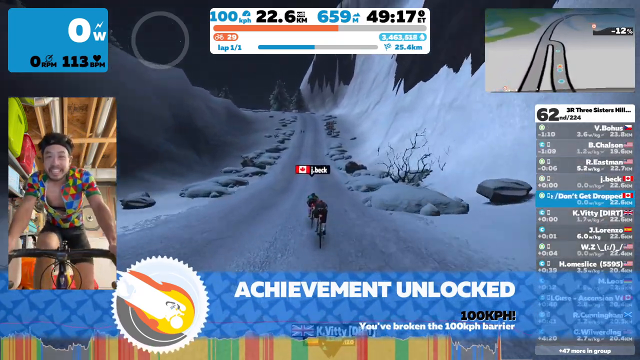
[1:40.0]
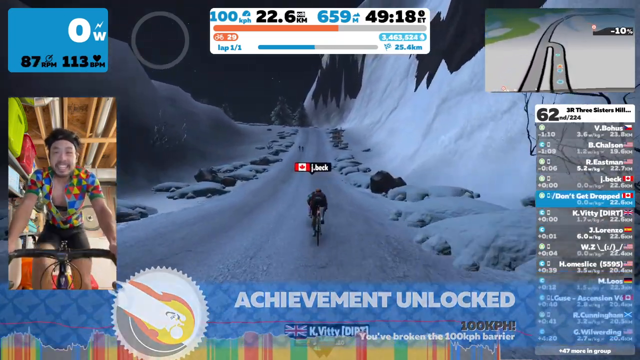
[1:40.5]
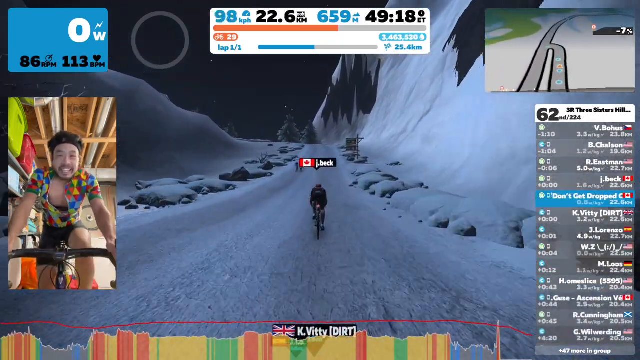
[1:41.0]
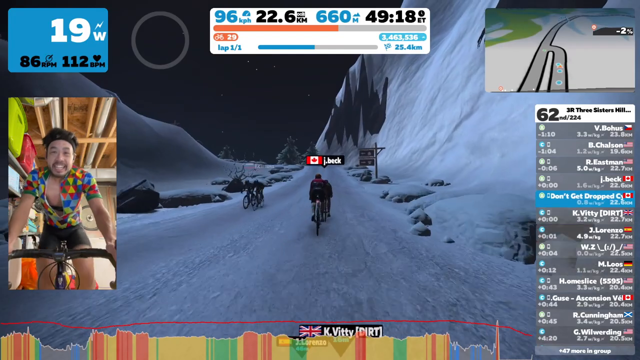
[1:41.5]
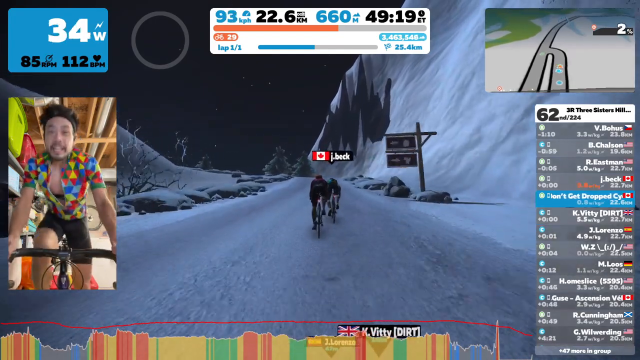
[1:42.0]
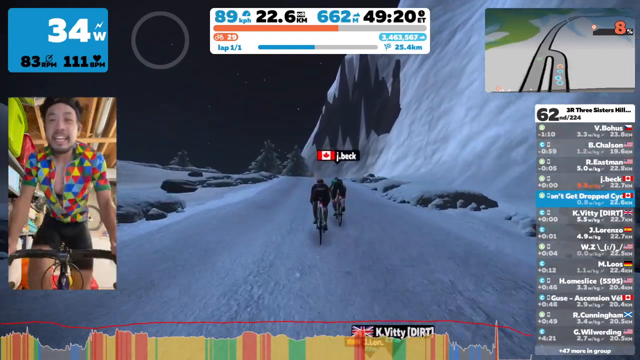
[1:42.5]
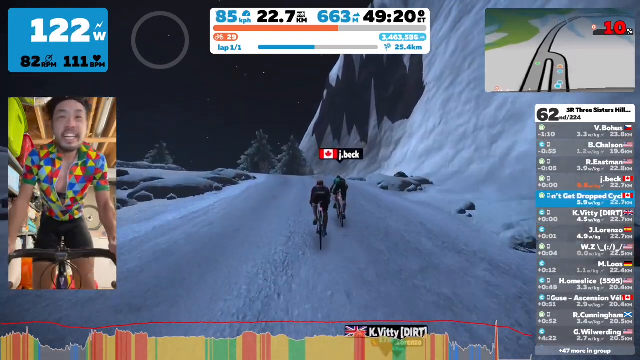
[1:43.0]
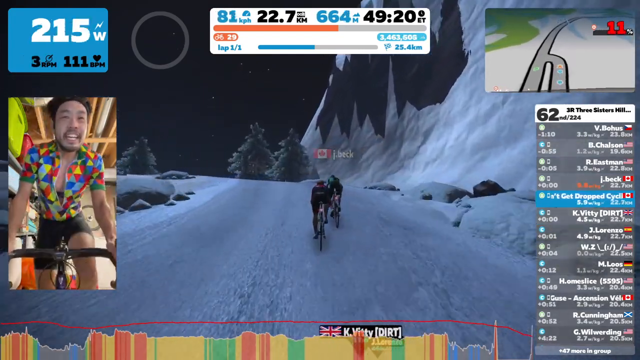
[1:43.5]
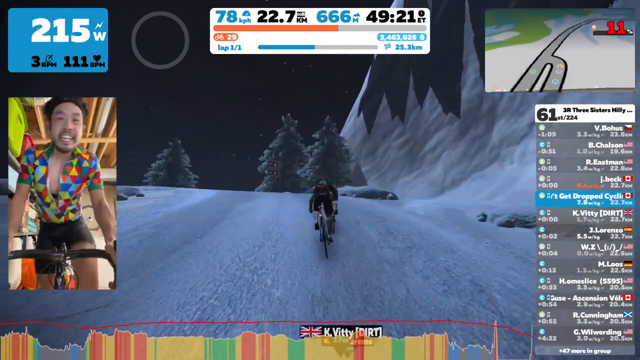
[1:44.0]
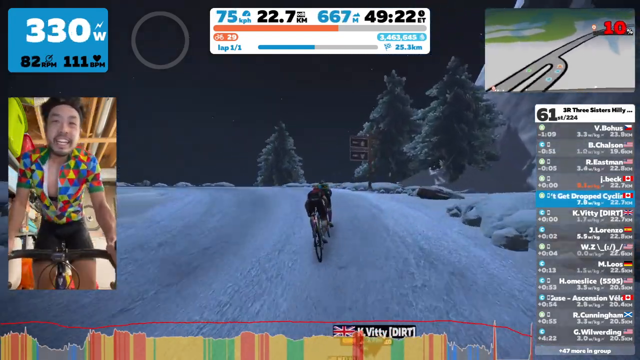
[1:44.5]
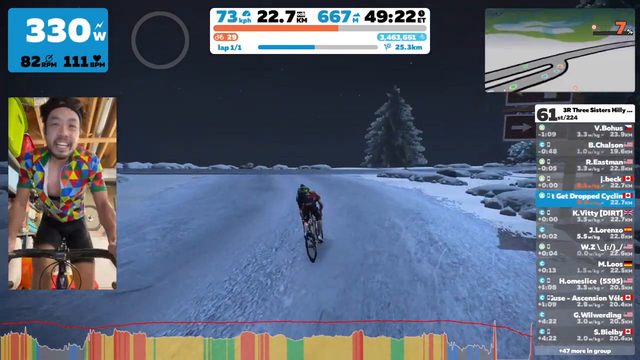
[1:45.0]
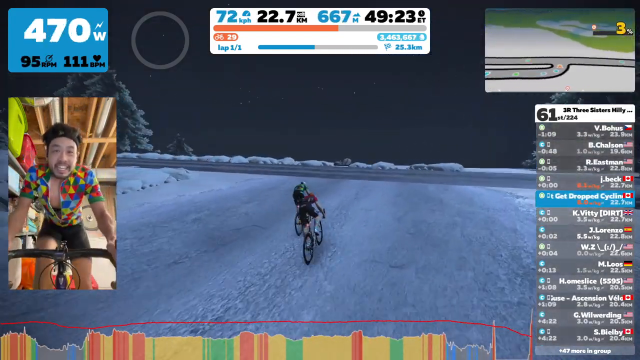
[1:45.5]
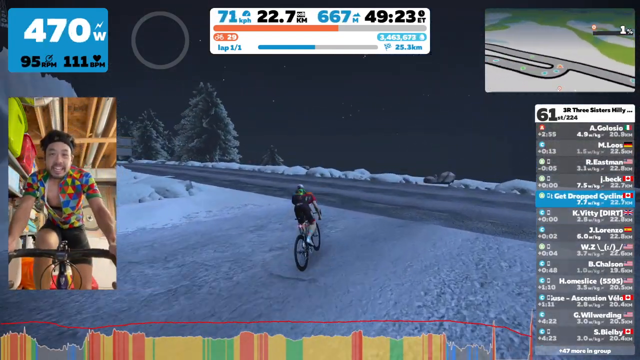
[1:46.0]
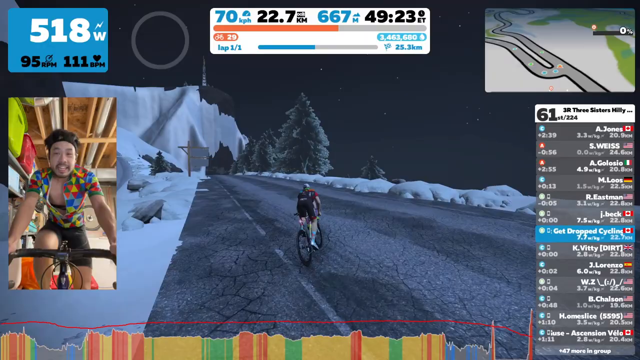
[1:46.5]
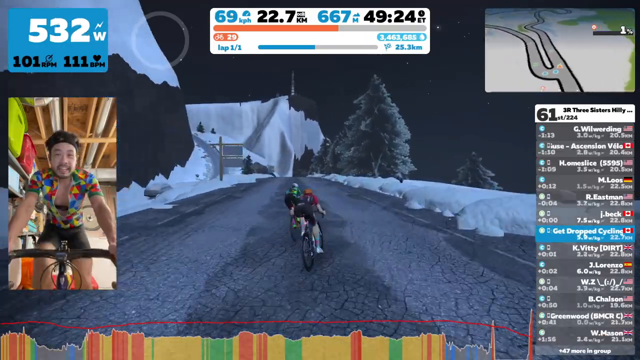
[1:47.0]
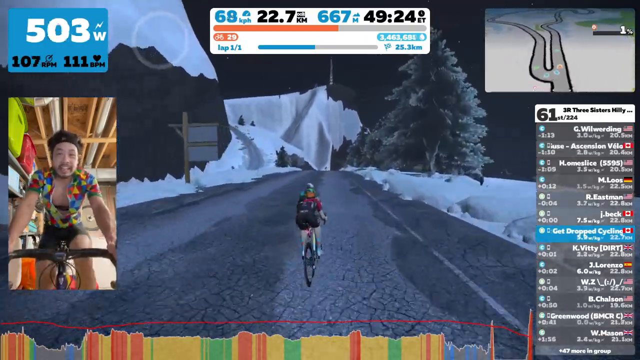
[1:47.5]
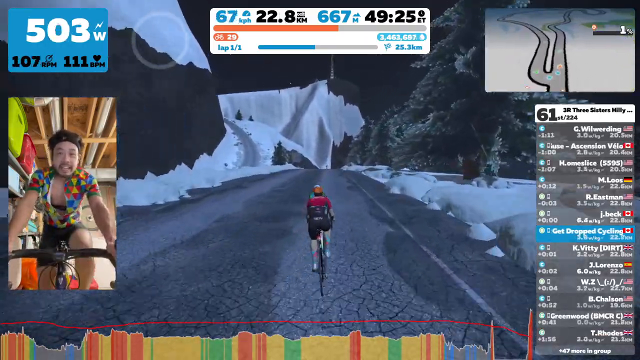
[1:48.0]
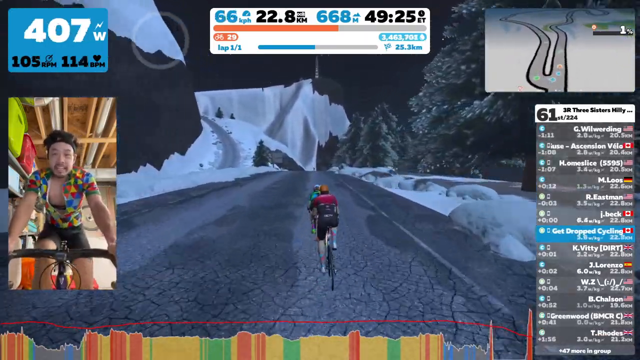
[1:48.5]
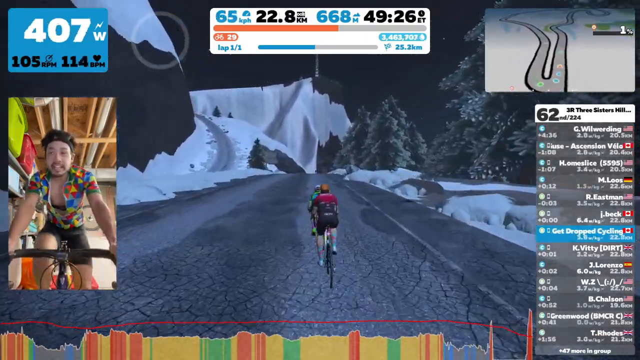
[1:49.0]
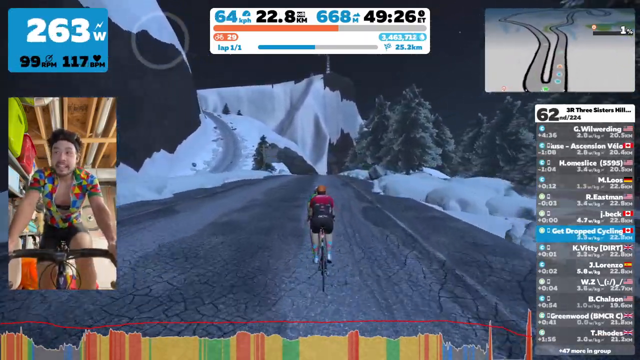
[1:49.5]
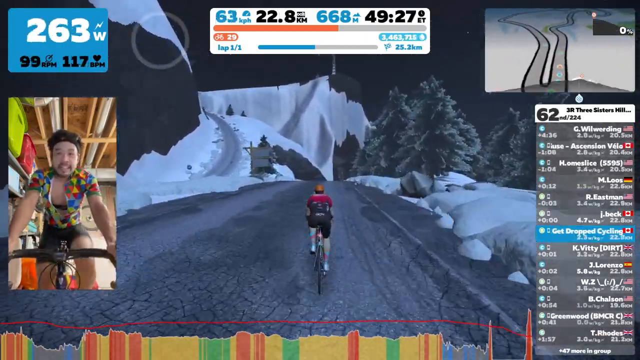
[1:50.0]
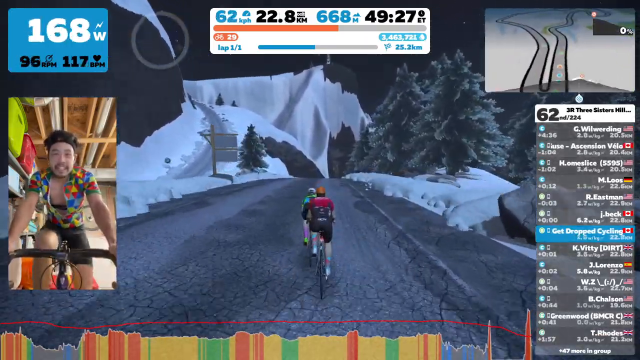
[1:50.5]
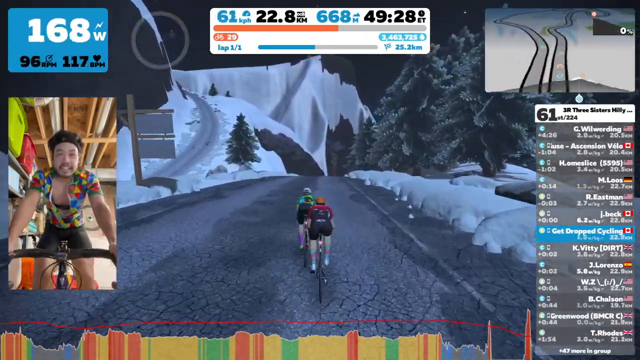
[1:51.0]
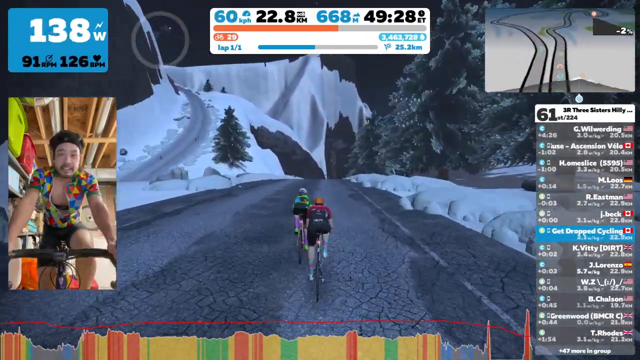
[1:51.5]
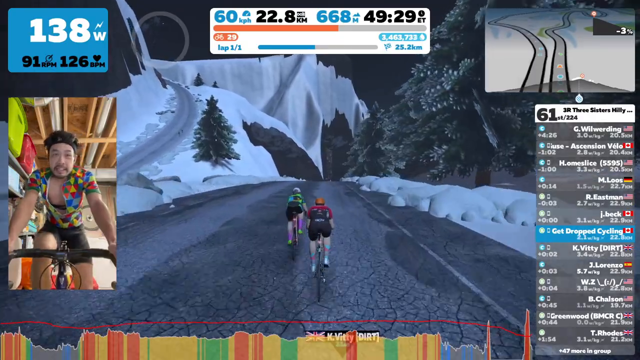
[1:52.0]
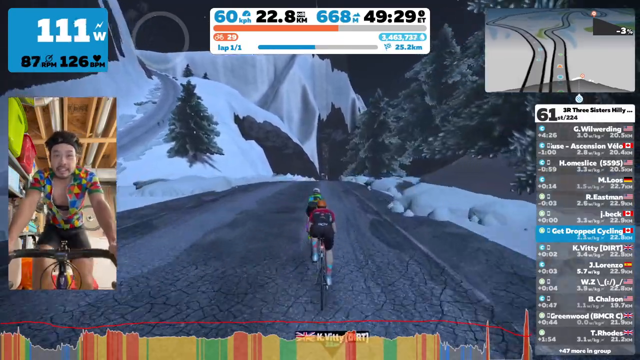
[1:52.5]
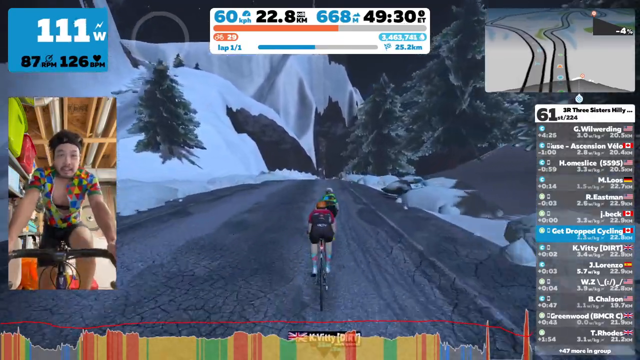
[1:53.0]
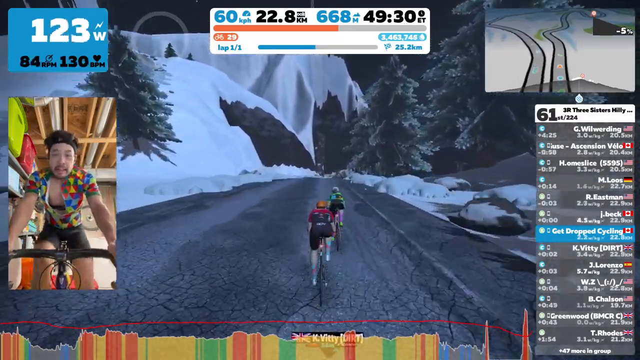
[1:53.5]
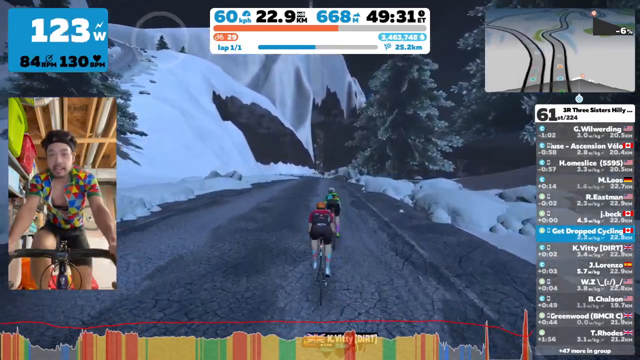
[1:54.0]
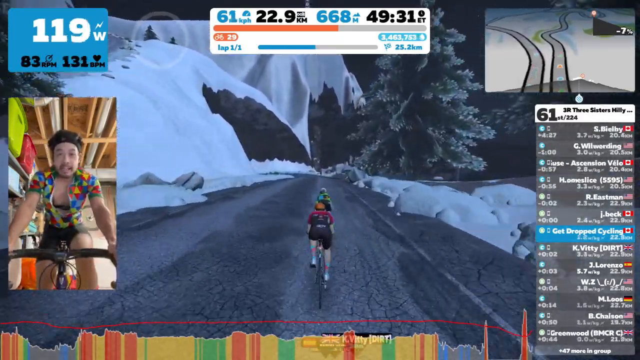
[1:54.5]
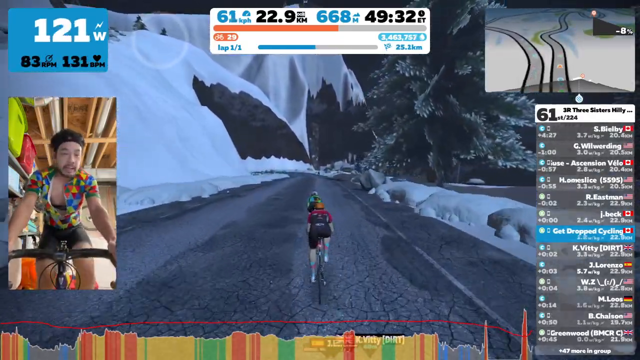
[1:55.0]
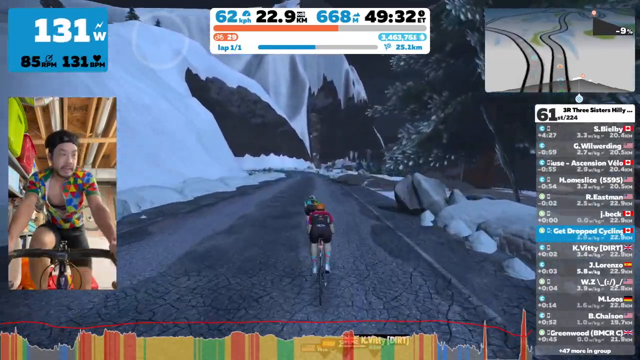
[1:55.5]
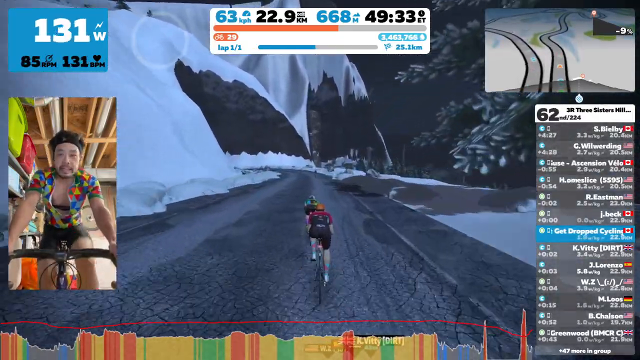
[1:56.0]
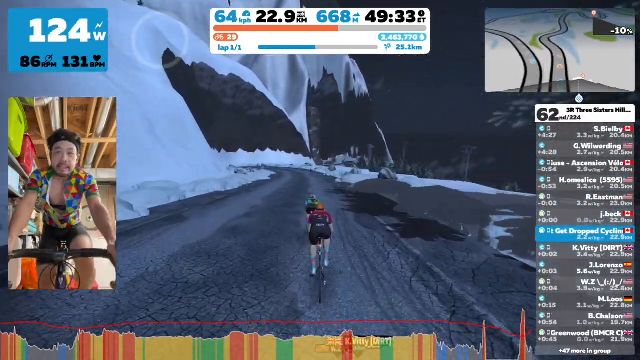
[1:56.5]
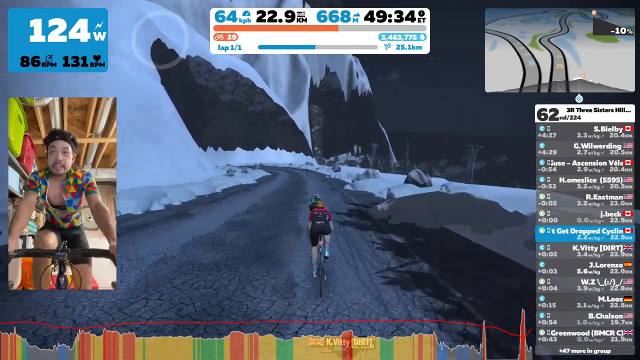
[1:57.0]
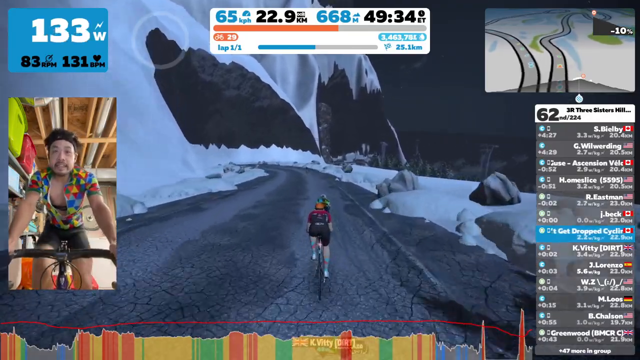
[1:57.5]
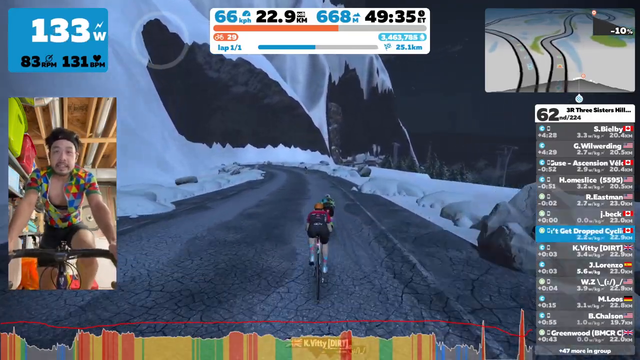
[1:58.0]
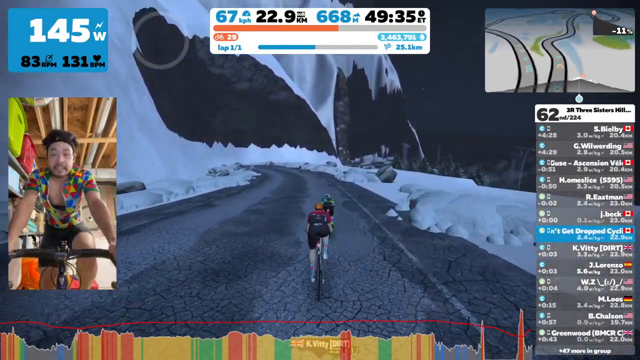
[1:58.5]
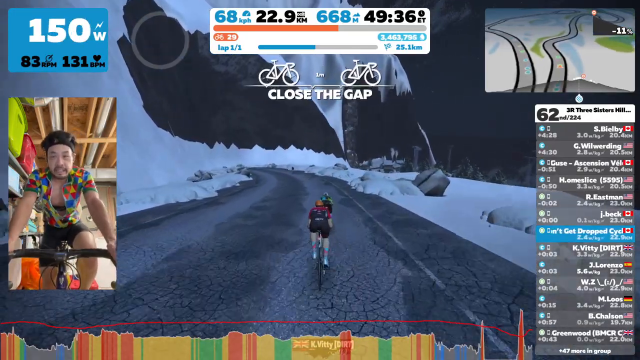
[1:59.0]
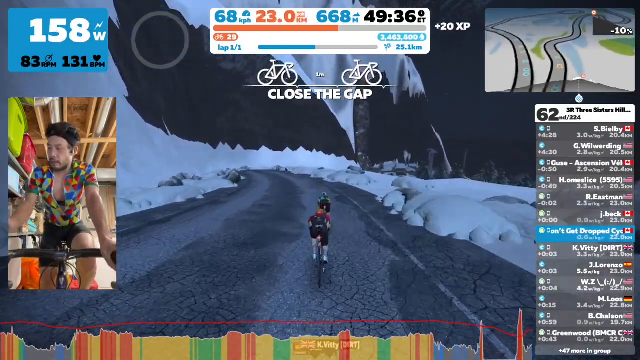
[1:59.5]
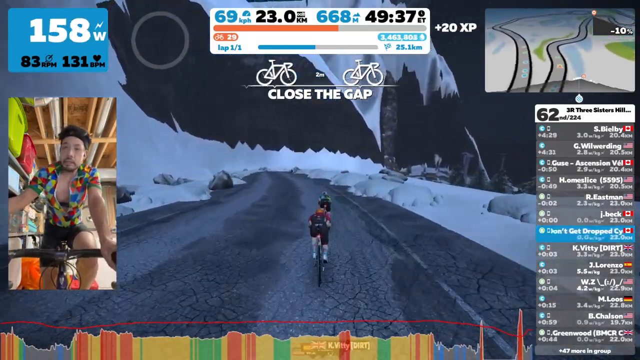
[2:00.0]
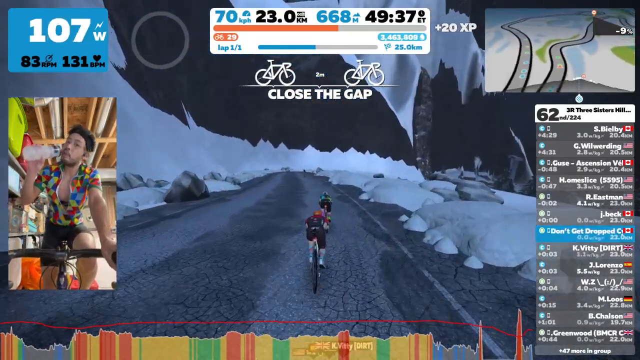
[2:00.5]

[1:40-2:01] The player pedals again, trying to pass someone named jbeck. Very close behind, he stands up and pedals as fast as he can, smiling and looking very anxious to pass. He has moved up to fifth place and is trying hard to get around the other player directly in front of him. The map shows the road straight for now with a curve coming up. The map's roads are outlined in black, surrounded by white land, matching the white, winter-like, mountainous game environment. The player keeps pedaling, and "close the gap" appears on the screen again. The player grabs a water bottle, and the video ends right after.